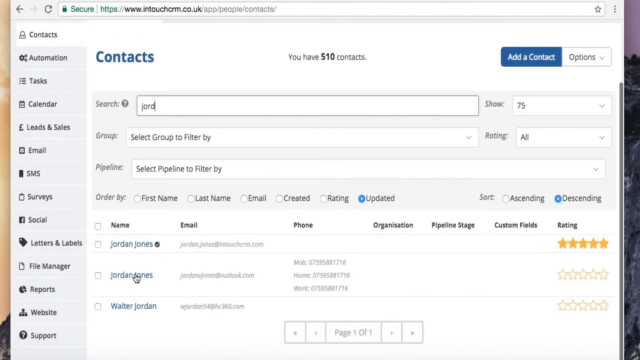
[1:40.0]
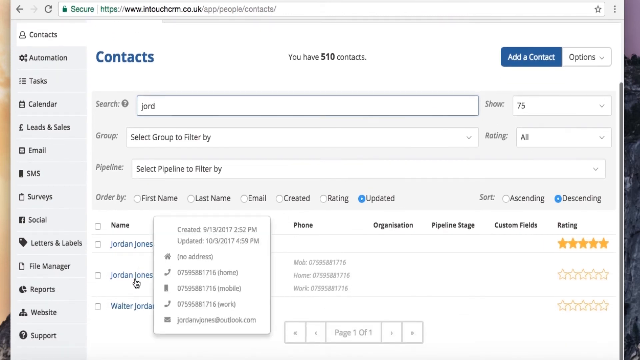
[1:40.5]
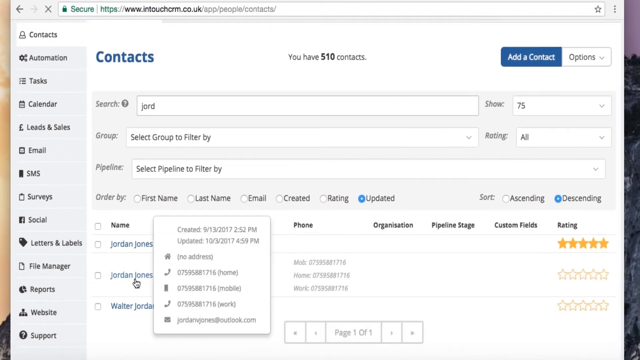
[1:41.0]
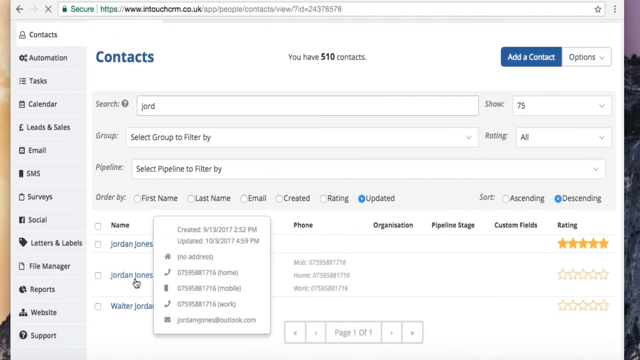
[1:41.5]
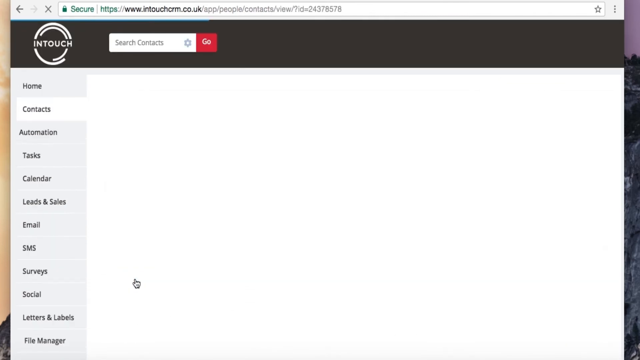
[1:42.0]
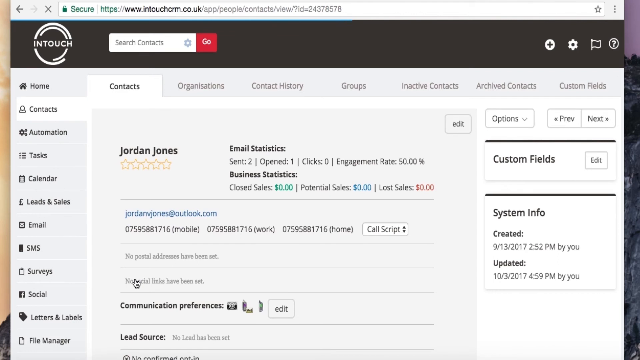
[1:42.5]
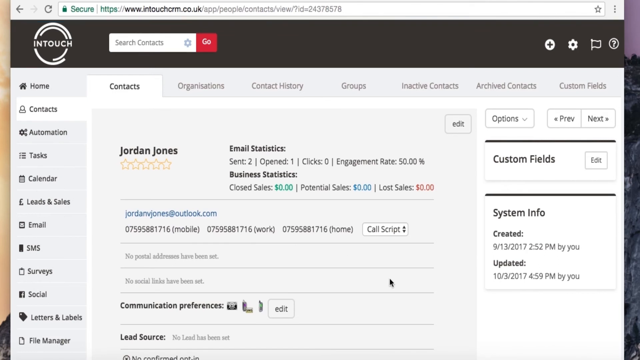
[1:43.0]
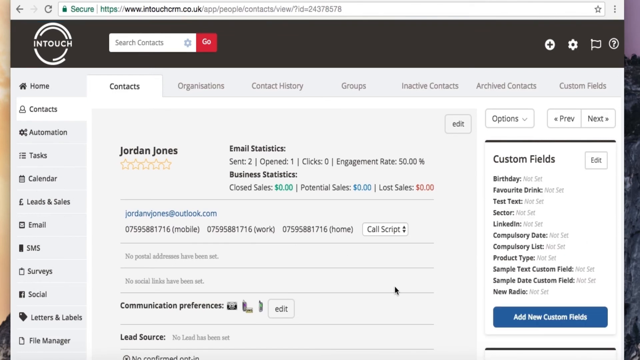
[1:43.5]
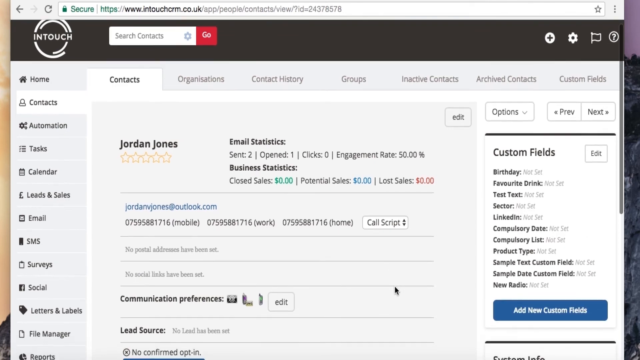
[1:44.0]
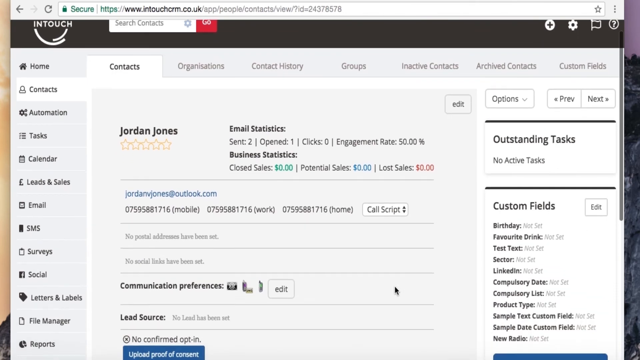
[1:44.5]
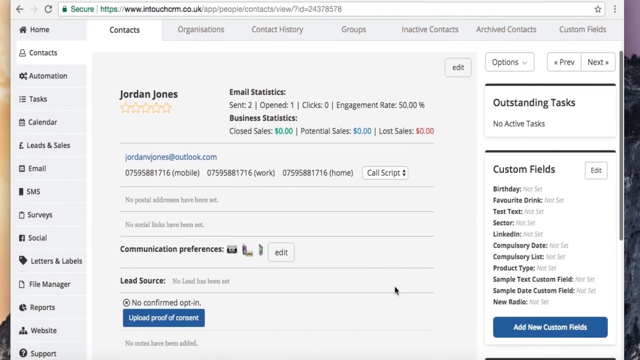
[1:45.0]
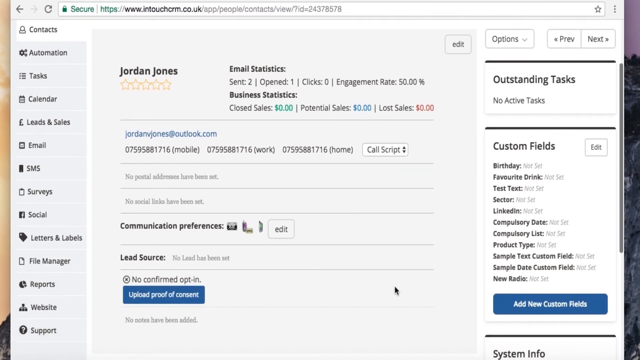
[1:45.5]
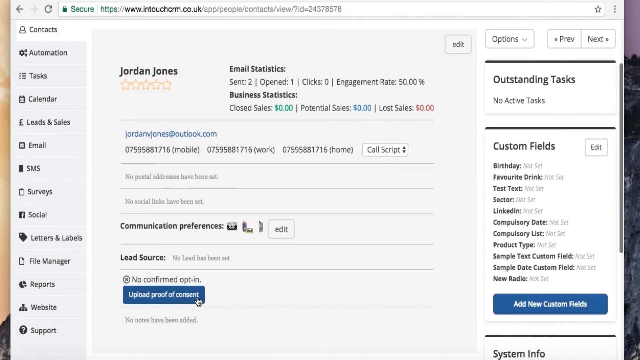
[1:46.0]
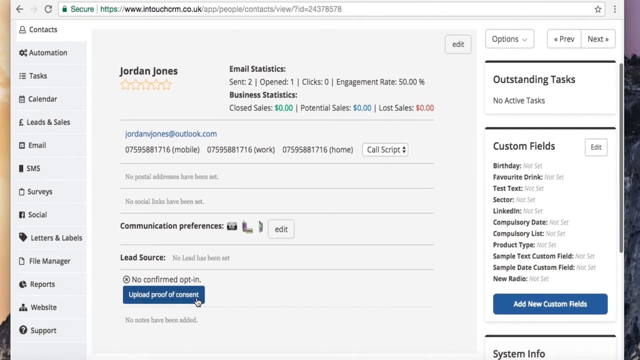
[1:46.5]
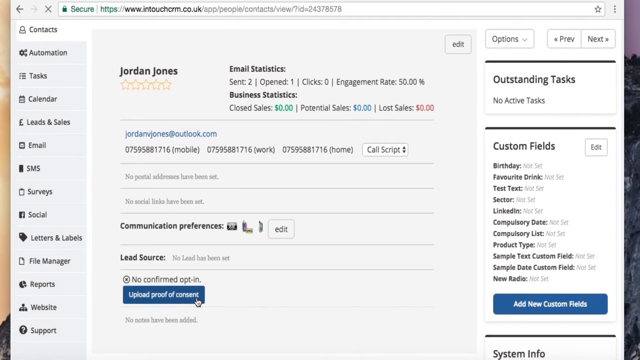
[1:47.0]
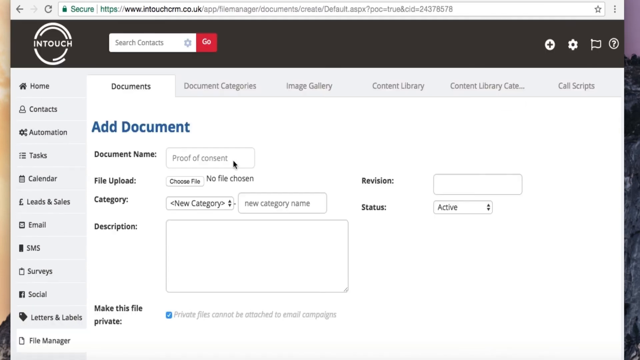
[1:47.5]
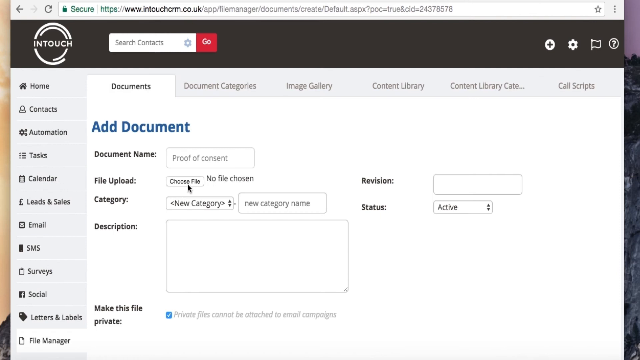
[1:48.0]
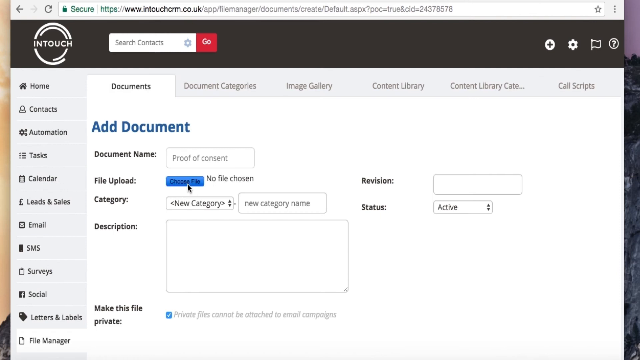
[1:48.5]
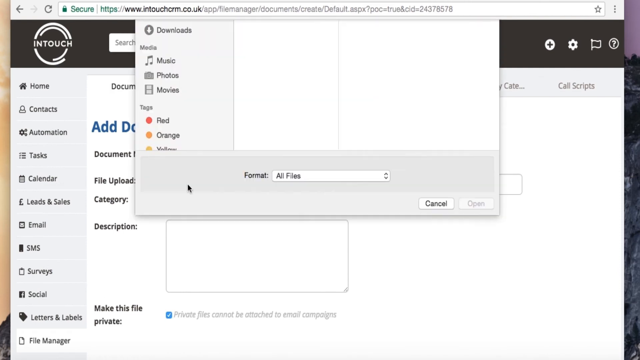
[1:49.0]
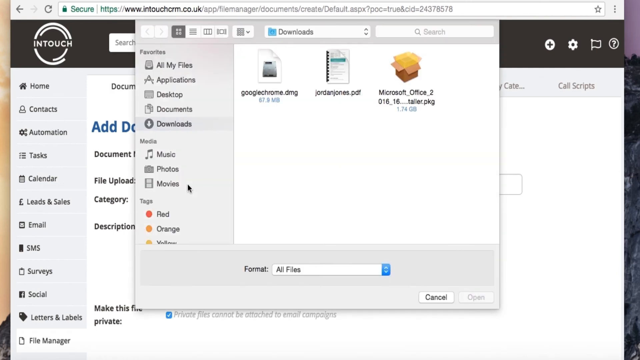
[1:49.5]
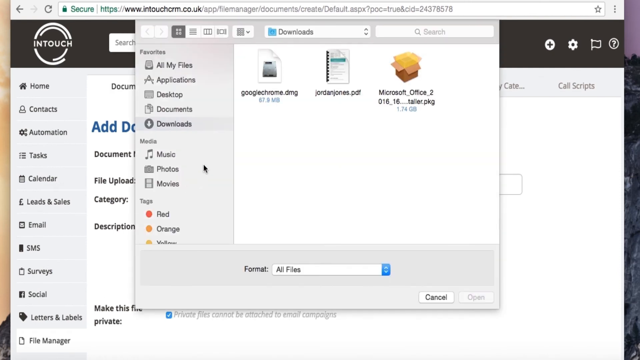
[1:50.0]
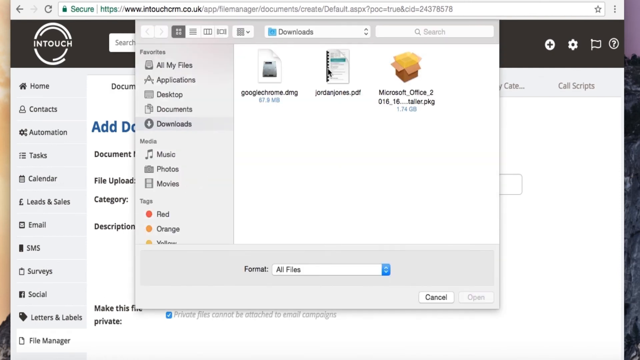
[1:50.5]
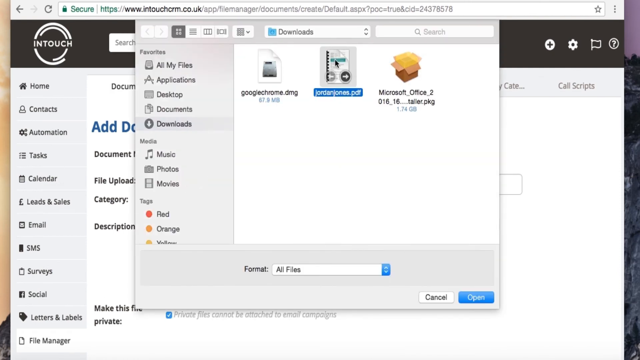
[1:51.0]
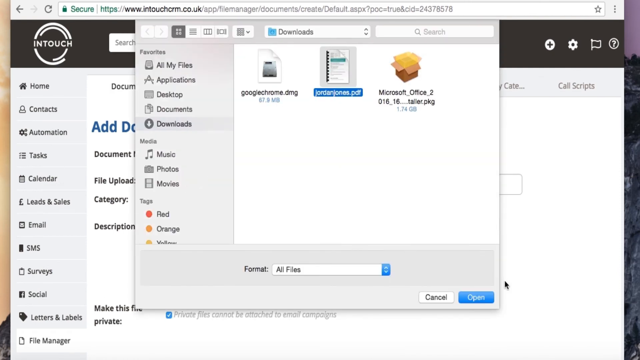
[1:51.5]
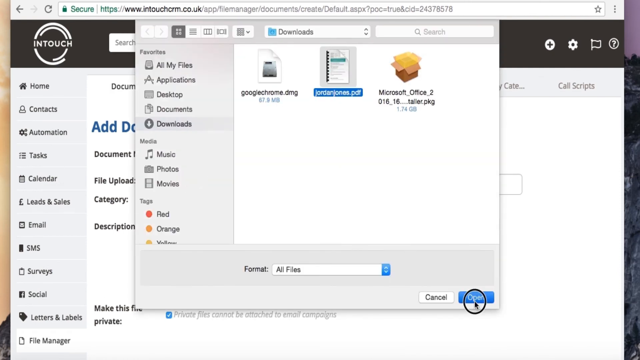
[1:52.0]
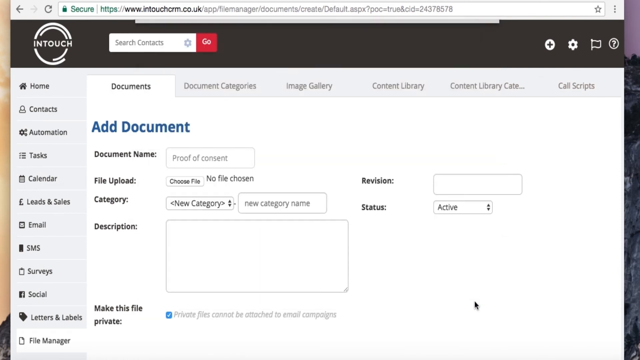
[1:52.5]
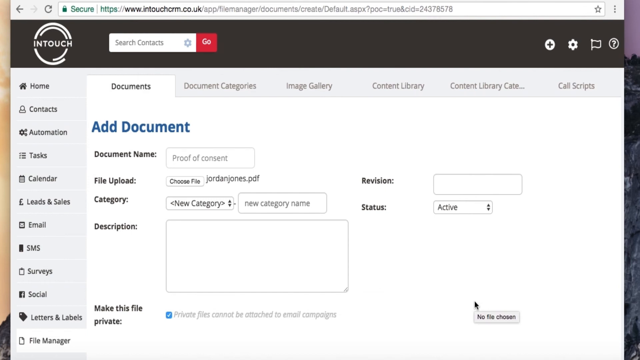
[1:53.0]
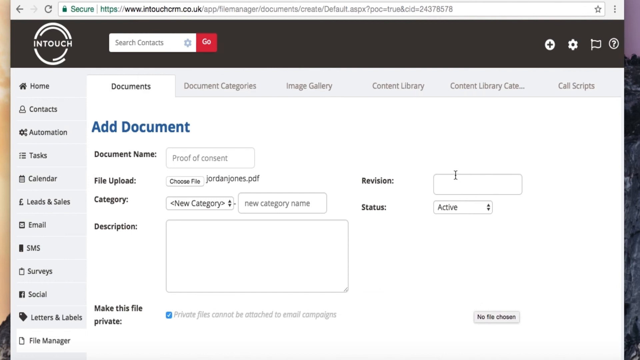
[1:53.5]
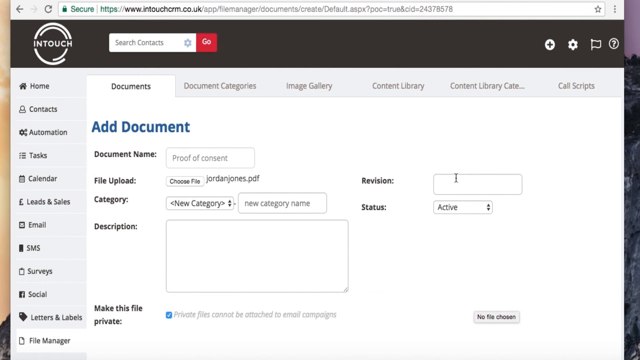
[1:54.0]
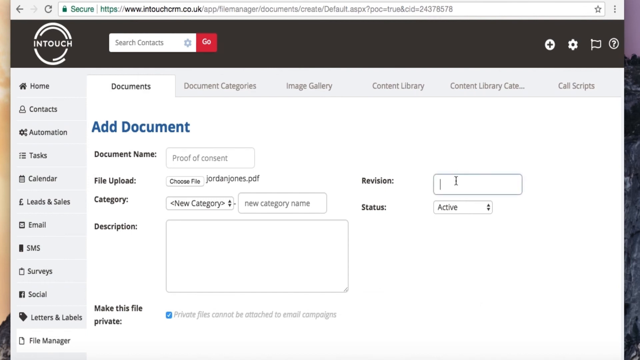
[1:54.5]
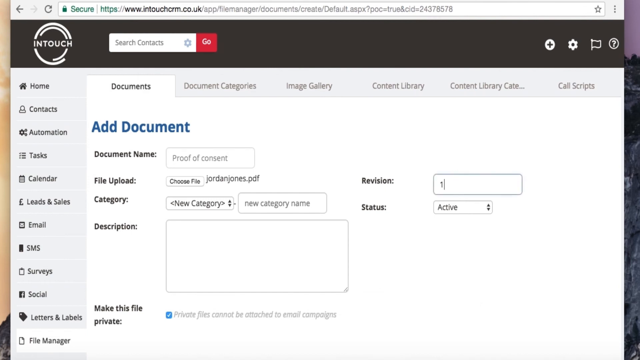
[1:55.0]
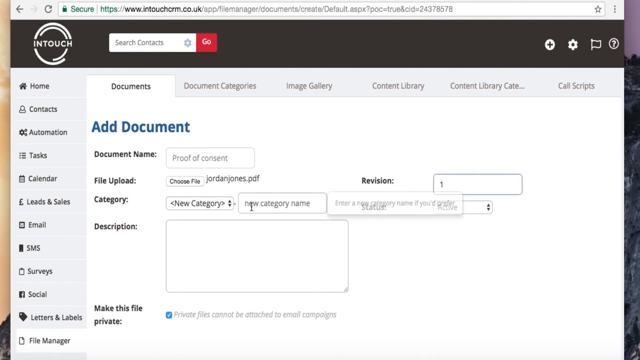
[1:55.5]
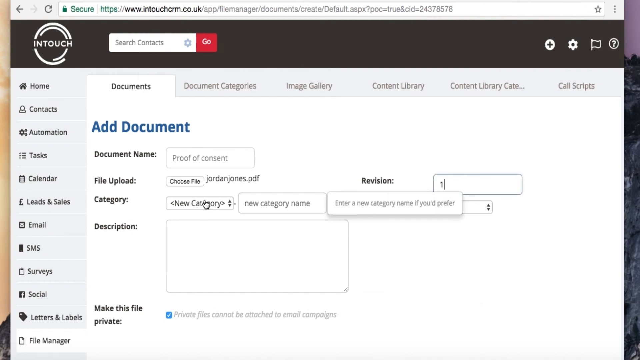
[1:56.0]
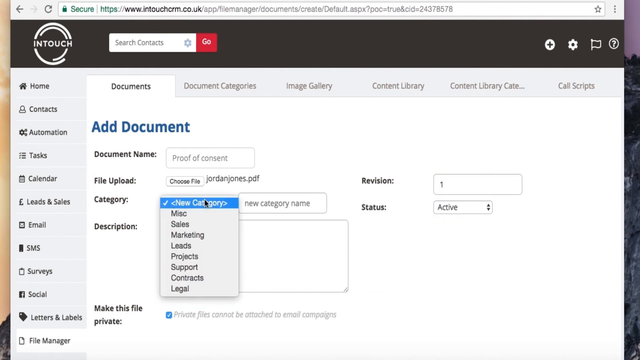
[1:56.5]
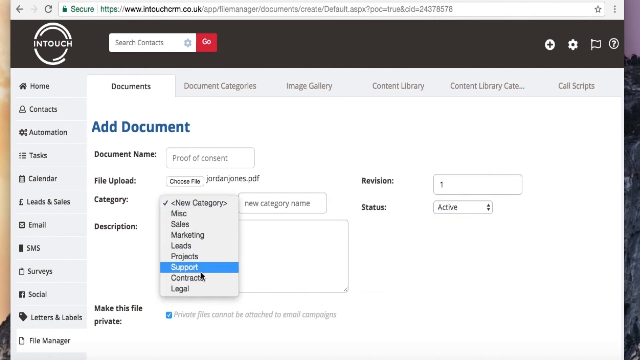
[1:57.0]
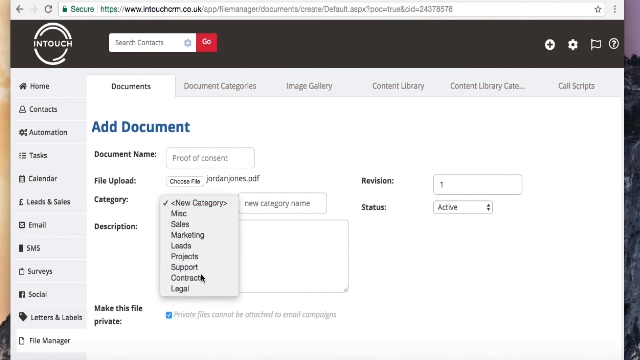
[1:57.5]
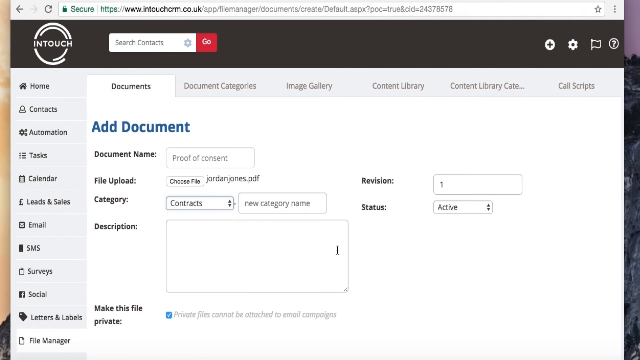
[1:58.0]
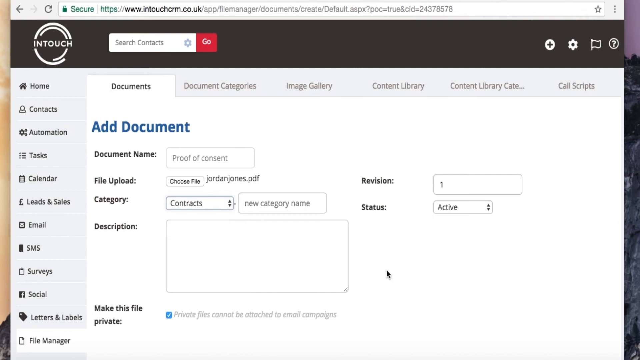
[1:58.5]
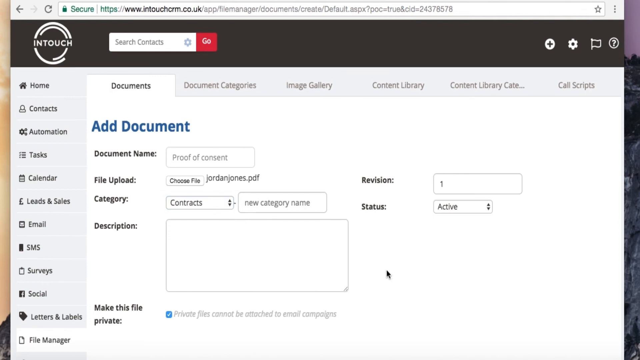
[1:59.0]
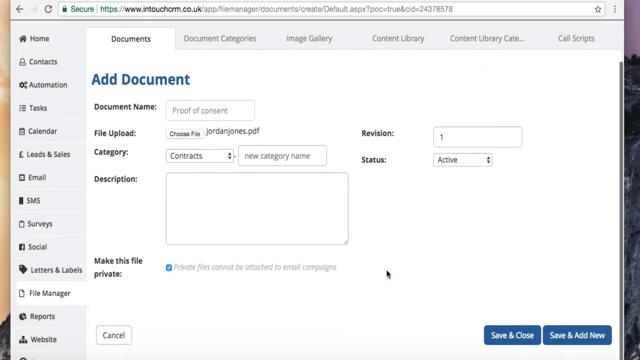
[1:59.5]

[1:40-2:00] Clicking Jordan Jones opens the Jordan Jones email that was sent. At the top left, to the right of the left column of links, it says contacts, followed by Jordan Jones with five stars underneath, none of them lit up. The page lists his email statistics, business statistics, email address, mobile phone, work phone and home phone. On the right side are custom fields for birthday, favorite drink and test text. The page is scrolled down a little and an upload proof of consent link is clicked, which leads to a document section that says "add documents" at the top. Below are document name, file upload, revision, category, status and description, each with a box to fill in. Choose file is clicked, bringing up a pop-up in the center; the file named Jordan Jones is selected and open is clicked. Next, revision is clicked and one is typed in, then category is opened and contact is selected.